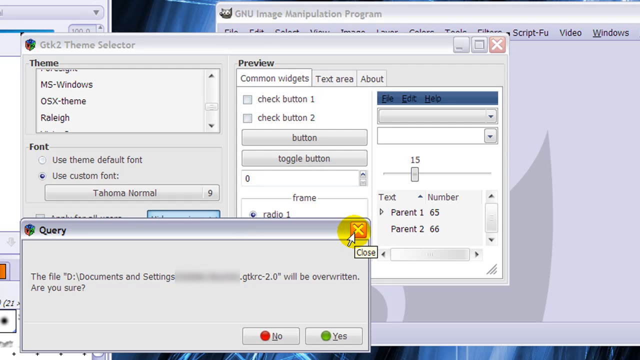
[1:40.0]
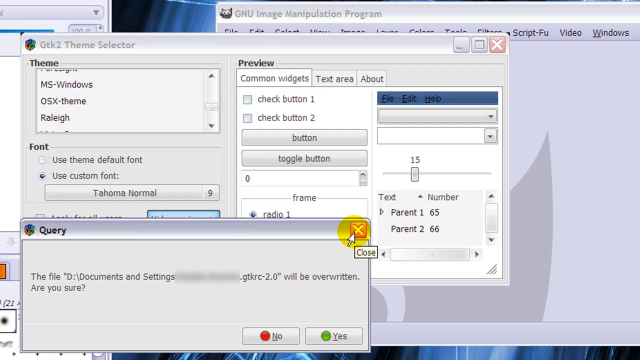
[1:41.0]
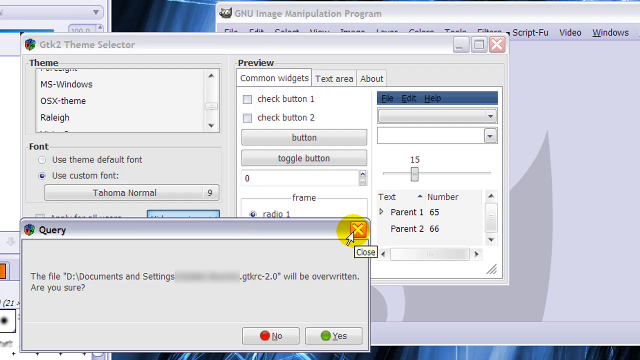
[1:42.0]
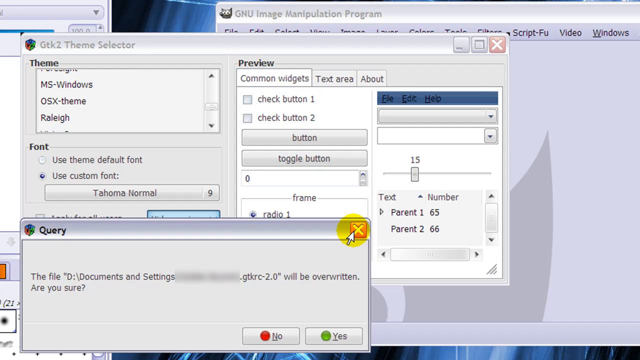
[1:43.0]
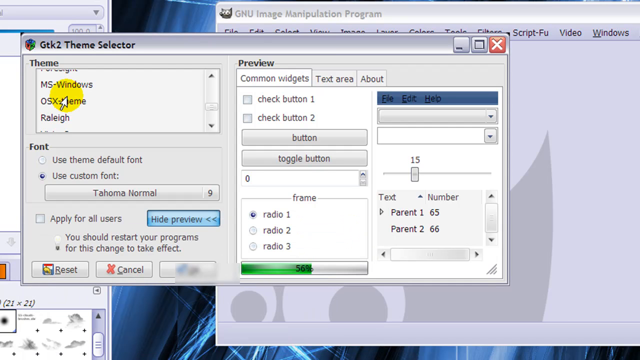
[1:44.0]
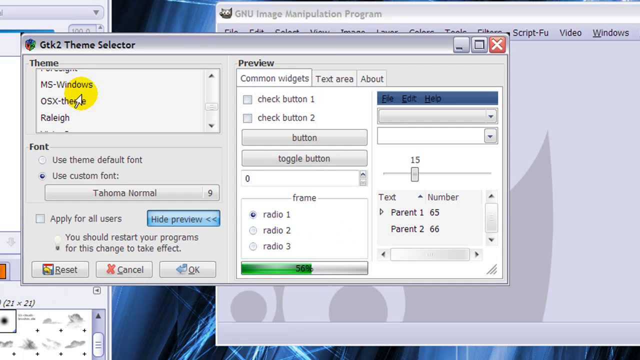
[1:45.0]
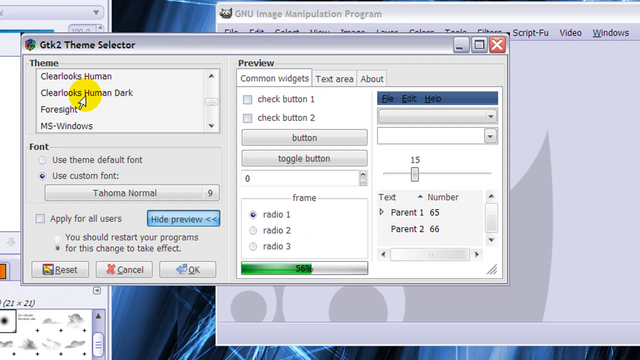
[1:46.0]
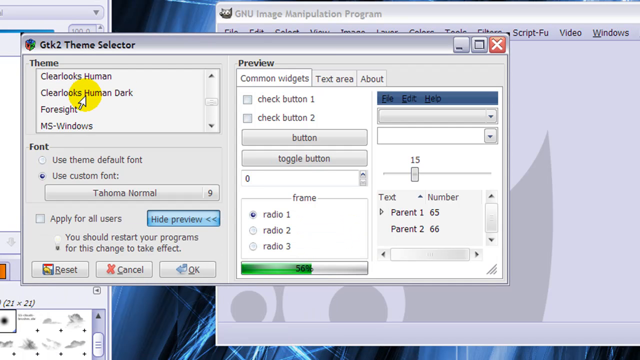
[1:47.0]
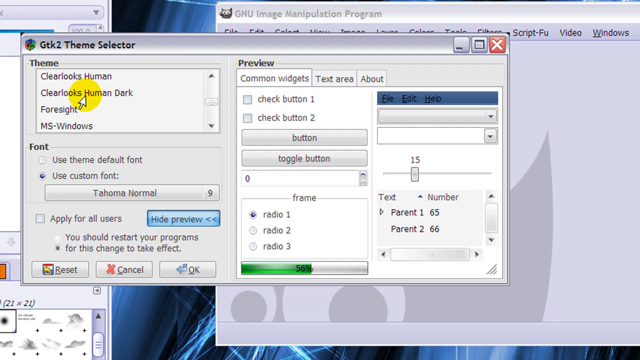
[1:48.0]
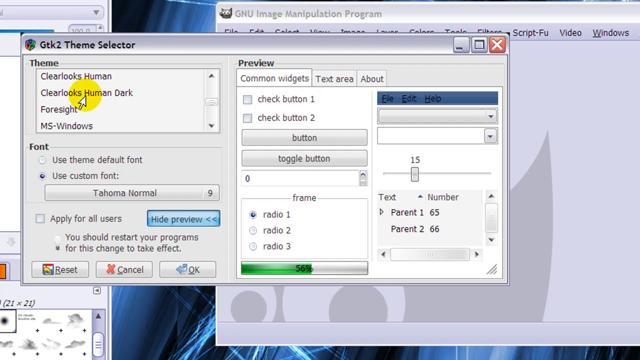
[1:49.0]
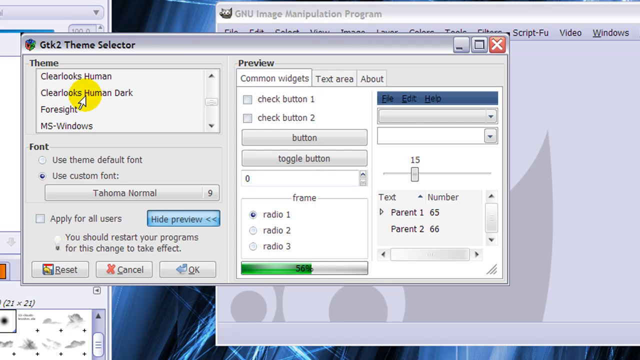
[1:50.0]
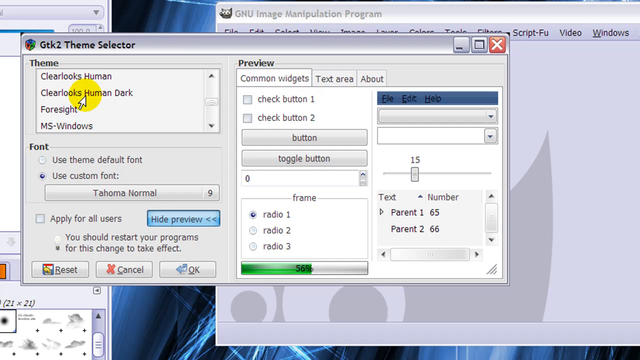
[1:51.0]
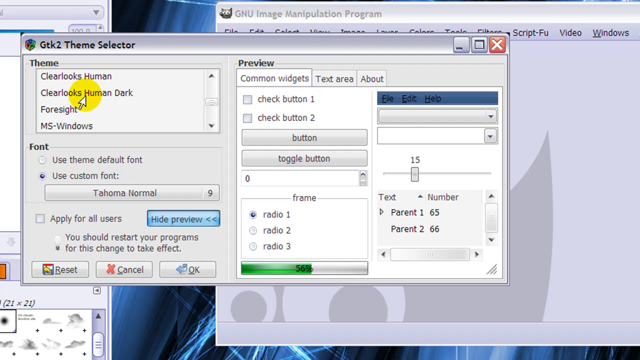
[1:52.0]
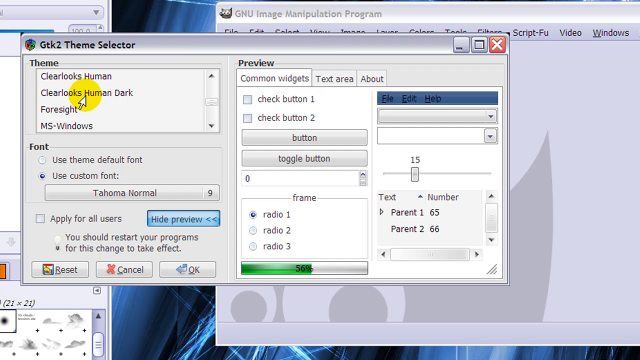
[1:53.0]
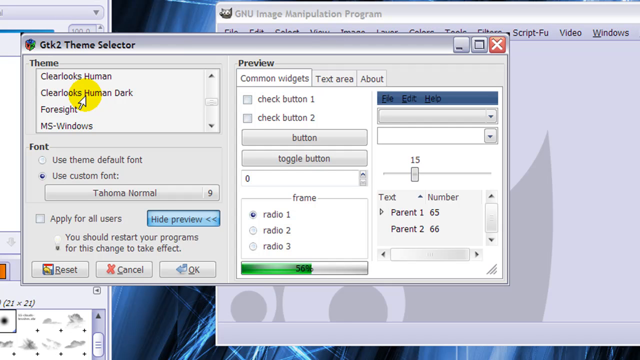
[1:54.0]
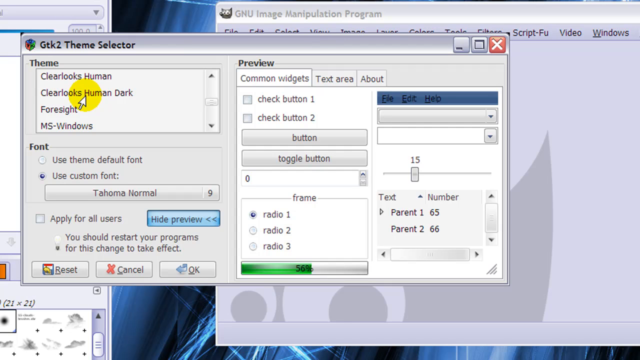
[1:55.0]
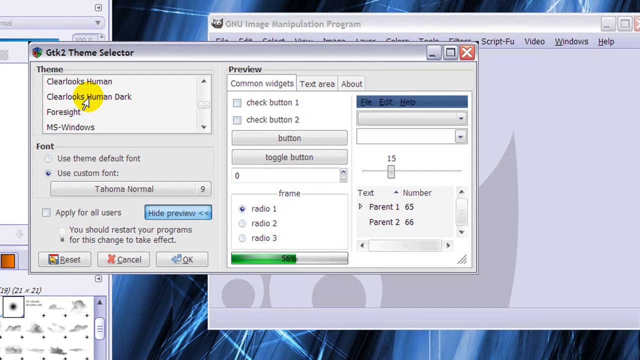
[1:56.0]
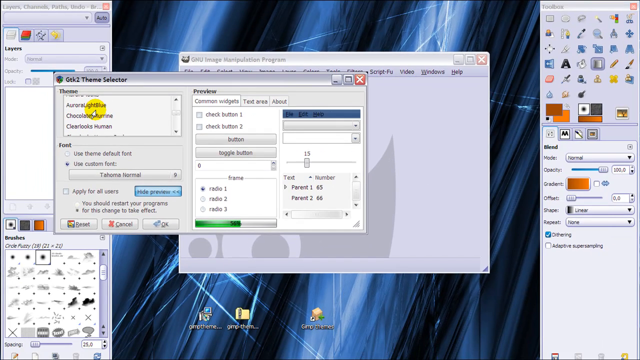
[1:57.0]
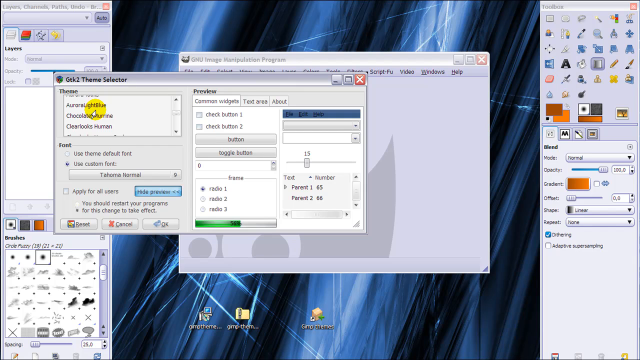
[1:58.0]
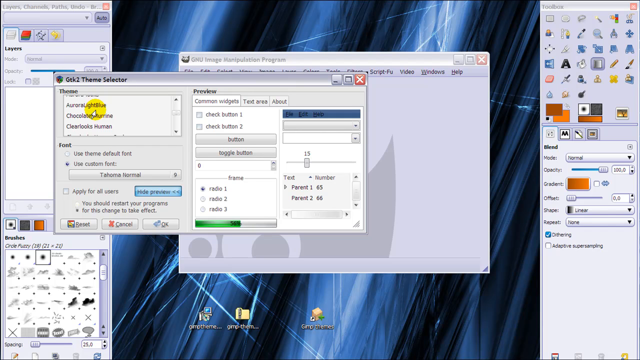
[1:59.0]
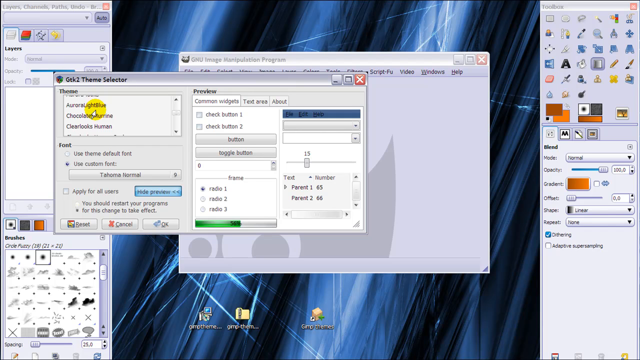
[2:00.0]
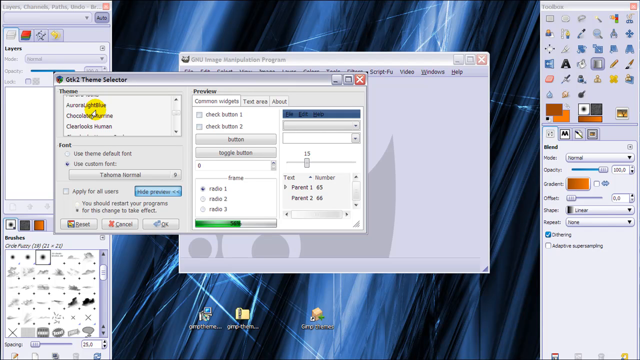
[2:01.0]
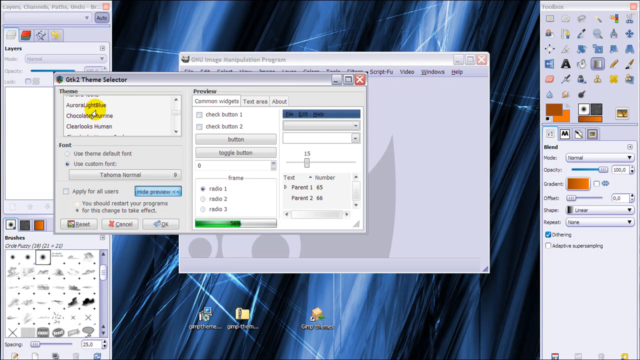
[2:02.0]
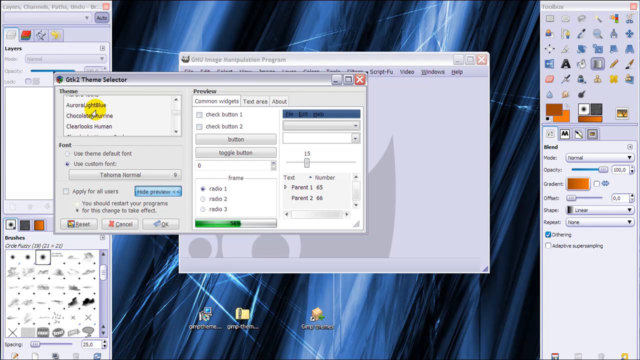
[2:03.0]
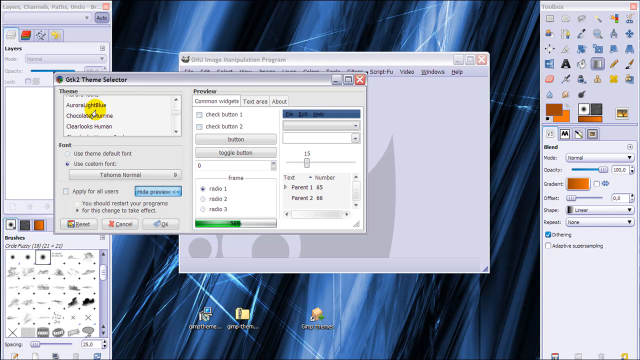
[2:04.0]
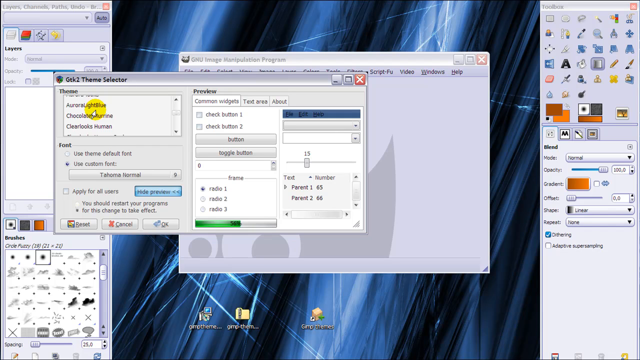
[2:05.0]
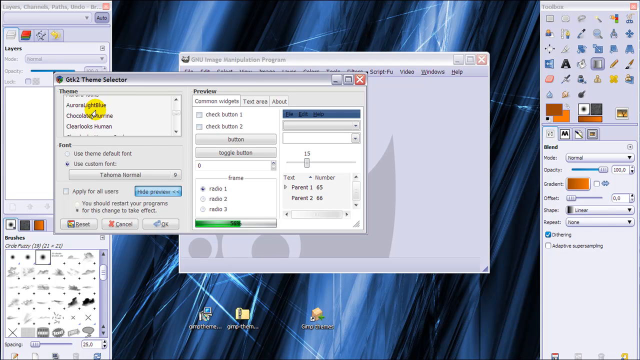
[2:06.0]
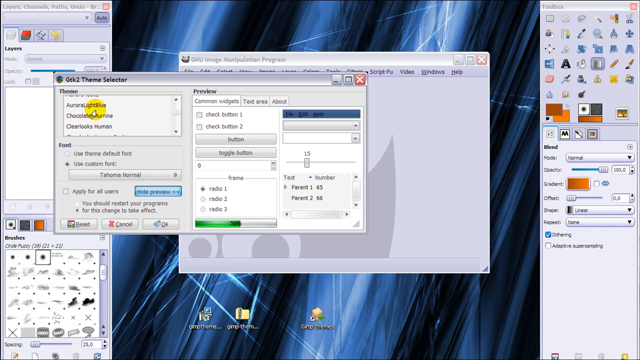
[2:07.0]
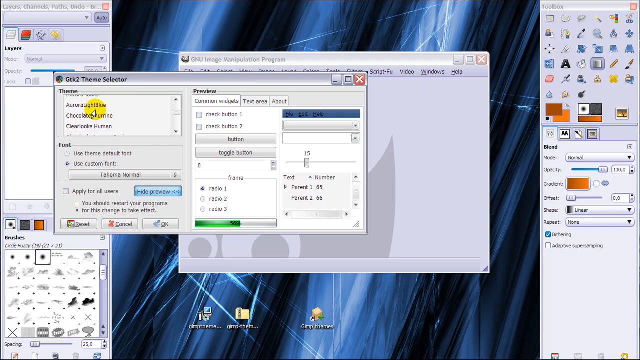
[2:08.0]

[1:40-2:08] A screen capture of a very vintage computer screen shows multiple windows open in the foreground. One window is labeled "Query" and reads "the file D:/documents and settings .GTKRC-2.0 will be overridden. Are you sure?" The mouse cursor, highlighted in a yellow circle, clicks the close button for this window. The window underneath is labeled GTK2 theme selector. The cursor moves to the top left, where a white box labeled "theme" lists multiple items in a scroll-down menu. The user scrolls down until reaching text that reads "clear, looks human dark" and keeps the pointer on that text. The view then pulls outwards, showing the full desktop beyond the window in the foreground.